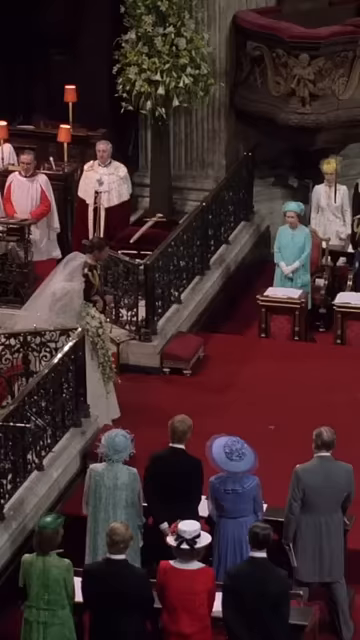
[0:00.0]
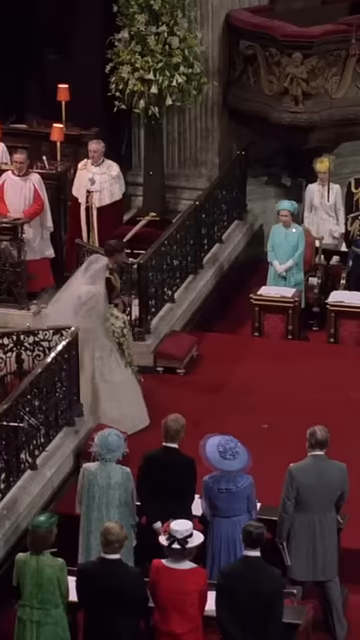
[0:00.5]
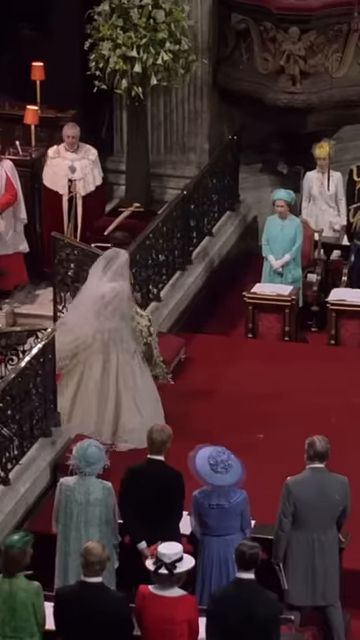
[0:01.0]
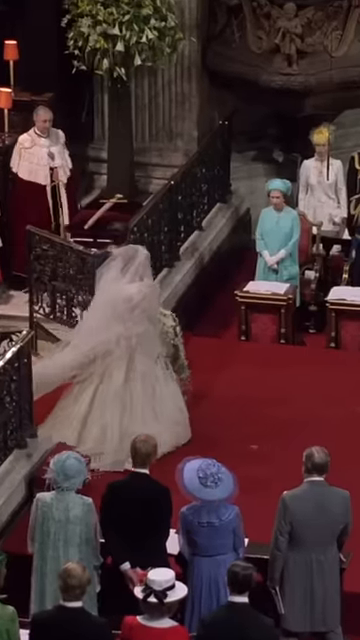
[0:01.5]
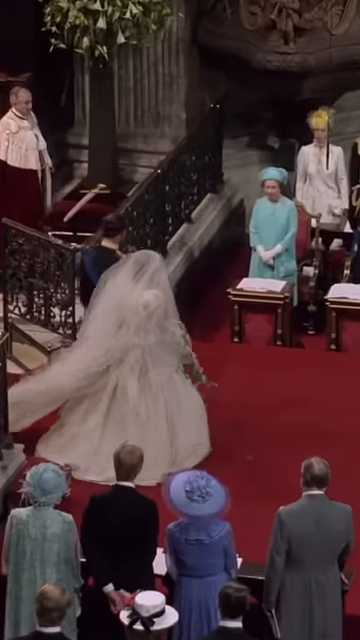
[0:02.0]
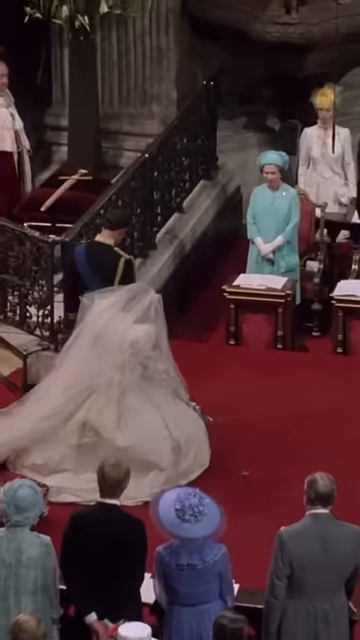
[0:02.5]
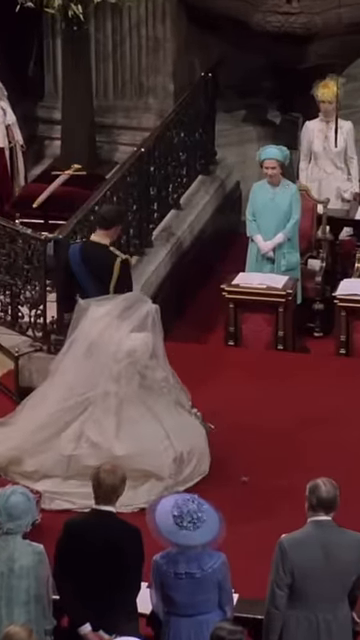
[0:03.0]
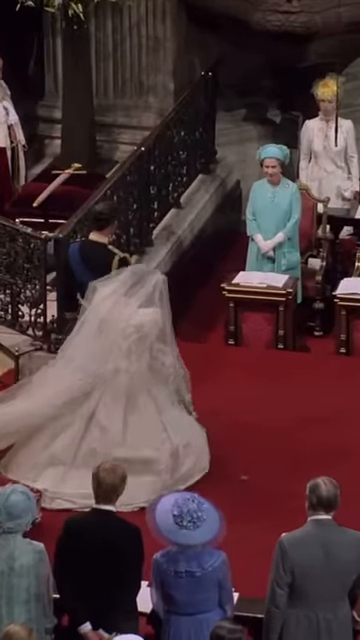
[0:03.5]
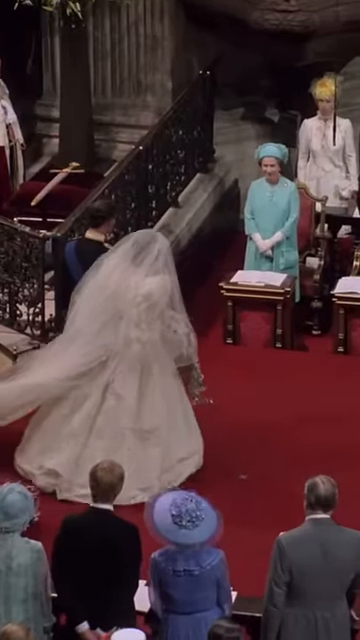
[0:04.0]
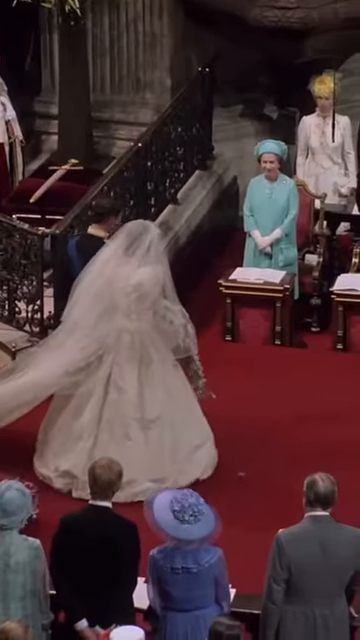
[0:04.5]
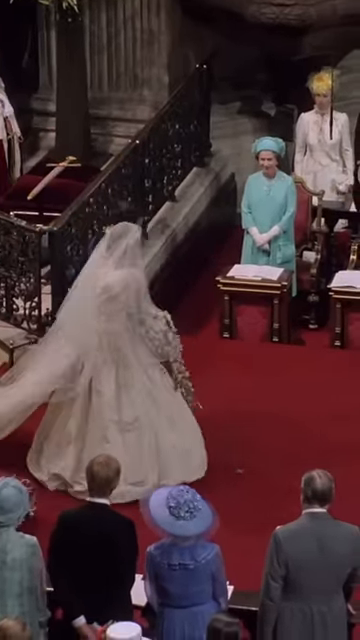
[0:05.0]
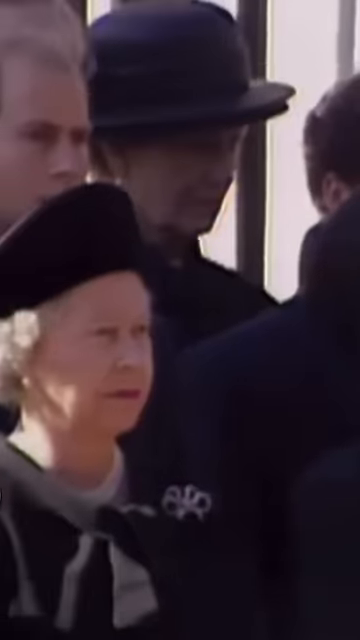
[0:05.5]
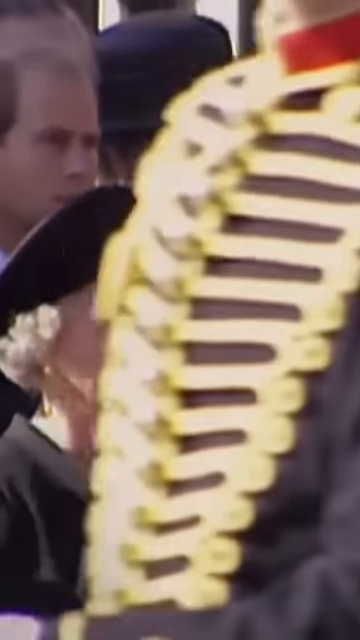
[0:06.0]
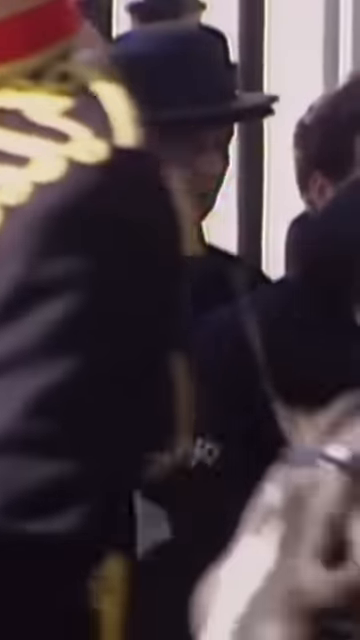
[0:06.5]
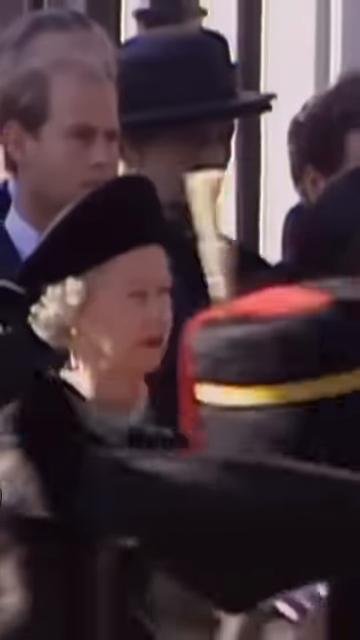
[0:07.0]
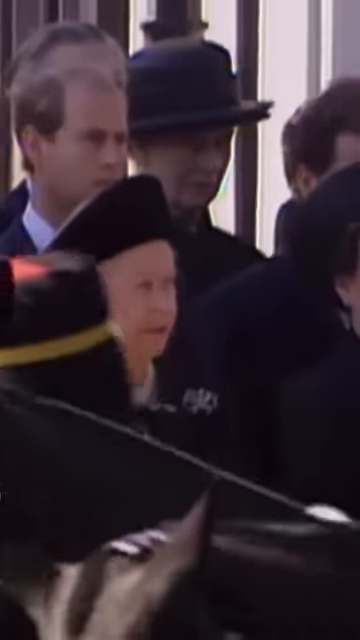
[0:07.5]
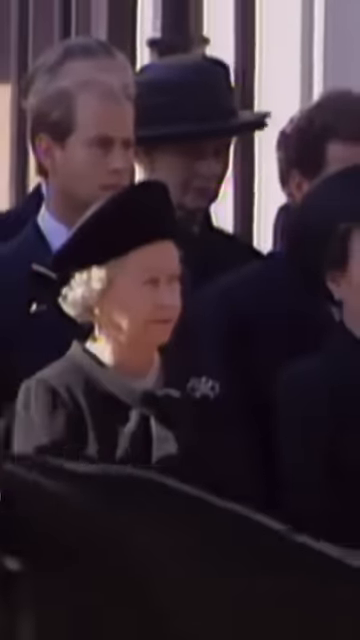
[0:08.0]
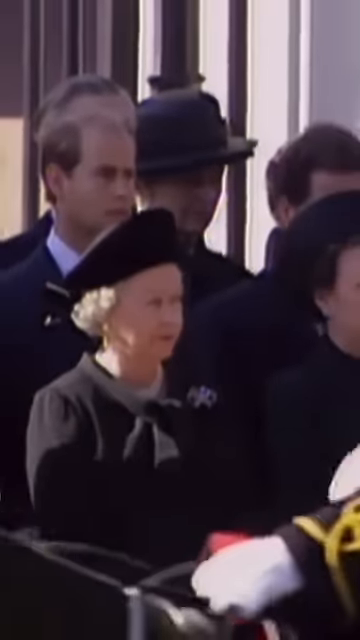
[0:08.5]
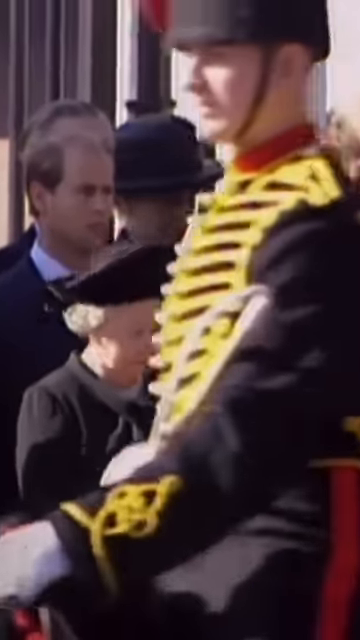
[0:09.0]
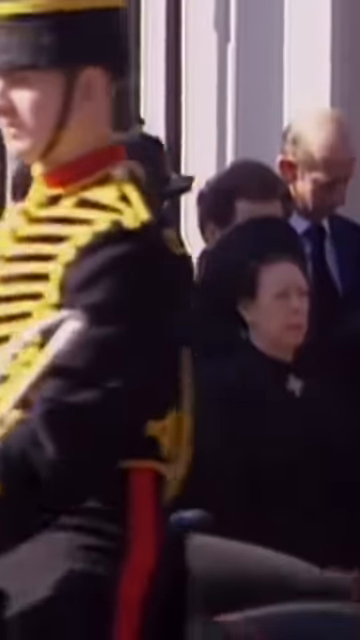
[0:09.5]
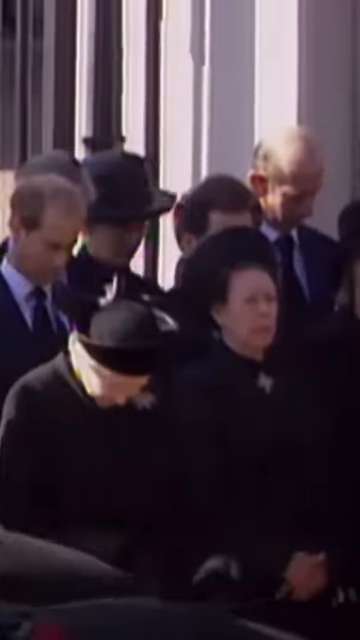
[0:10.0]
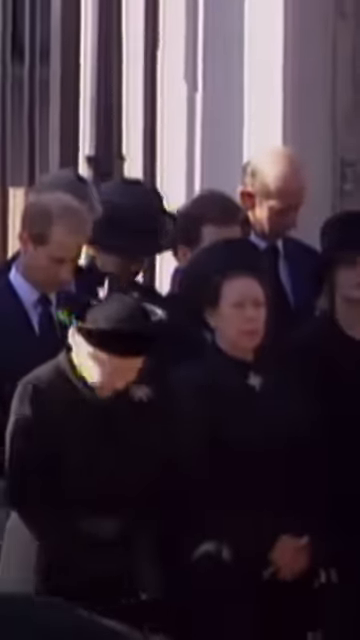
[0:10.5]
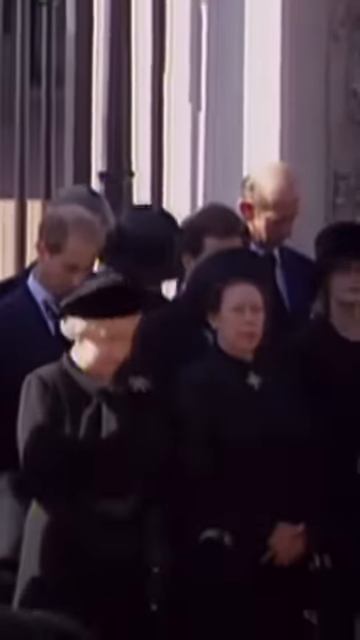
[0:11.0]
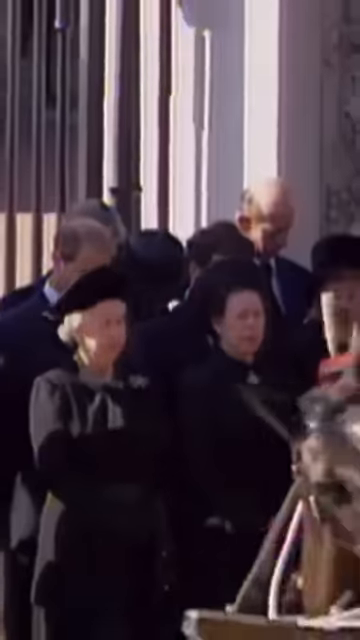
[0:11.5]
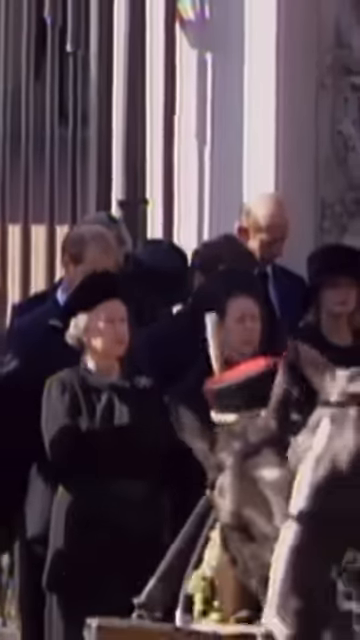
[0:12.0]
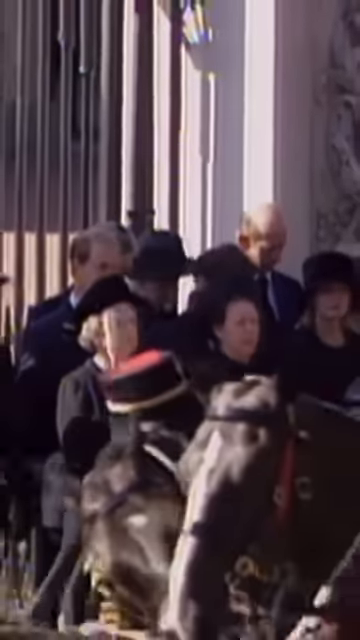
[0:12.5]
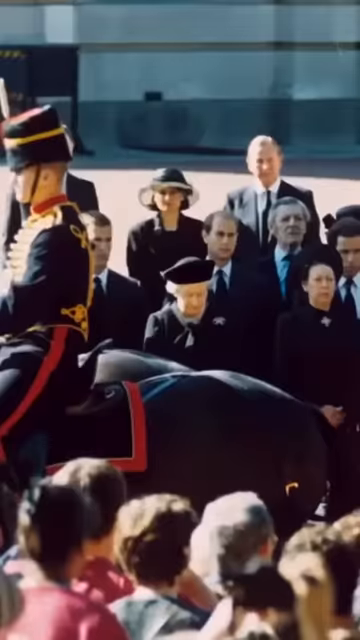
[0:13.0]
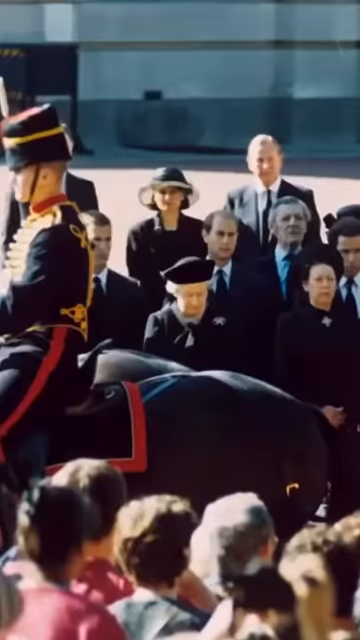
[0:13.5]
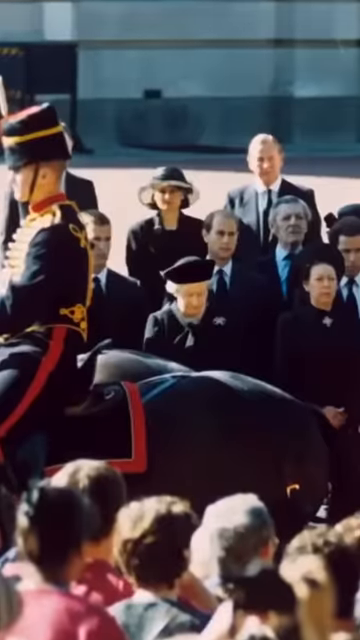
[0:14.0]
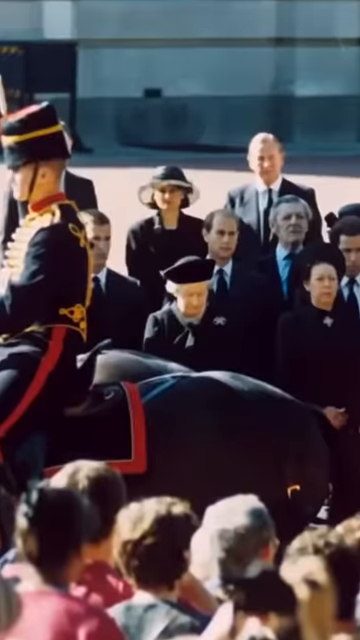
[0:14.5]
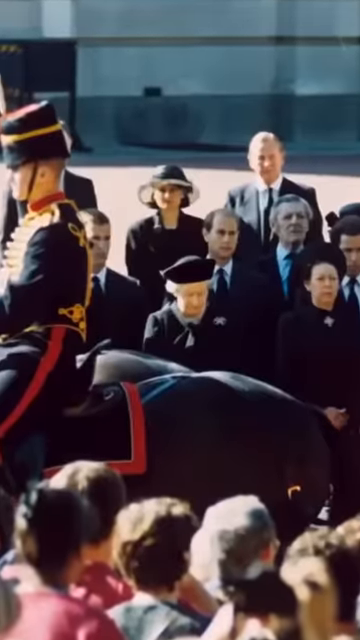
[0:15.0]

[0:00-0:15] The video appears to be a compilation of several clips of the royal family, centered on Princess Diana. The first clip shows her at her wedding, with Prince Charles by her side. The second is a close-up shot of Queen Elizabeth the second mourning the loss of Princess Diana. Judging by how people are acting and what the royal family is wearing, the footage seems to be mainly of the funeral, though it may be a memorial rather than the funeral itself. They are wearing all black and look upset and saddened. Prince William is in the back, and his body language suggests this is very important to him. His father, Prince Charles, is more or less nearby, along with other members of the royal family. Prince Harry is not visible, and what is apparently Queen Elizabeth the second's daughter is on her right-hand side.